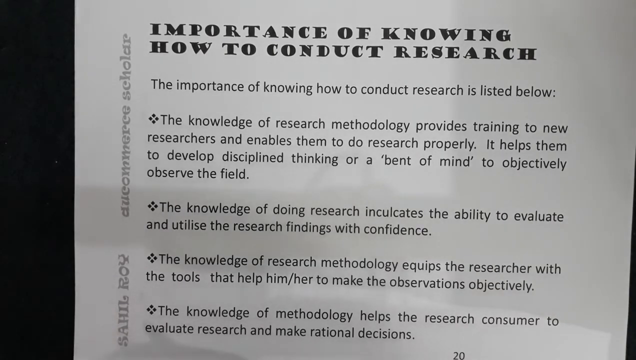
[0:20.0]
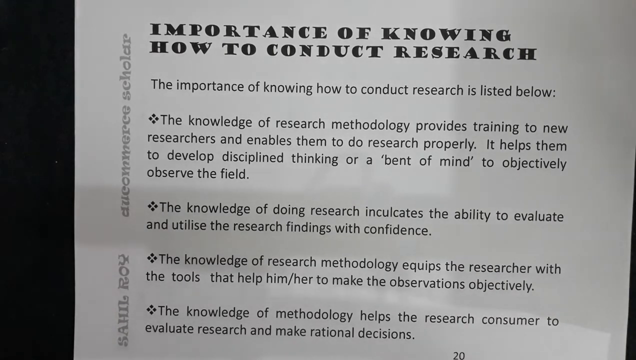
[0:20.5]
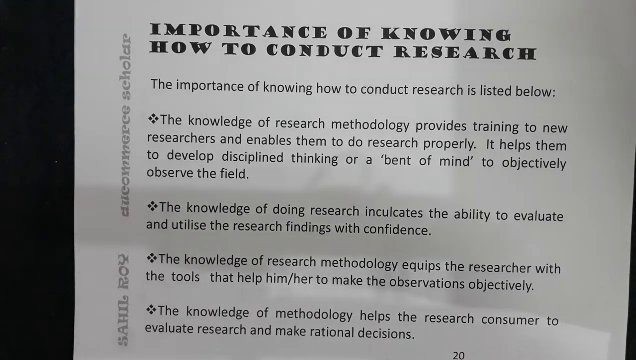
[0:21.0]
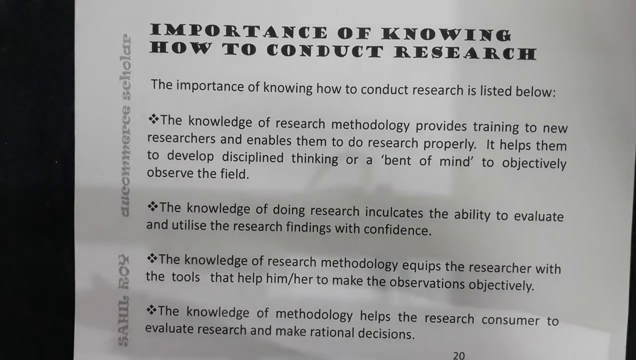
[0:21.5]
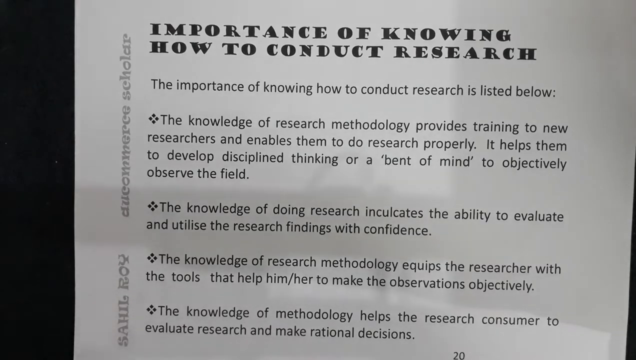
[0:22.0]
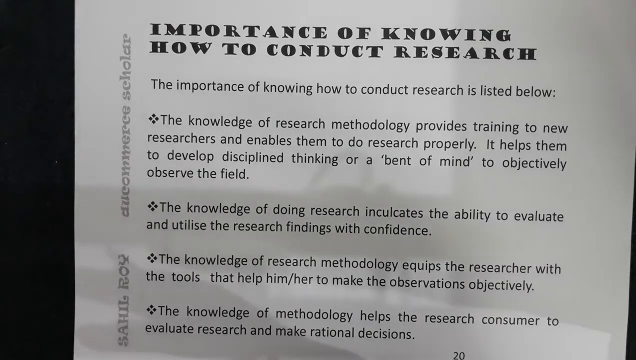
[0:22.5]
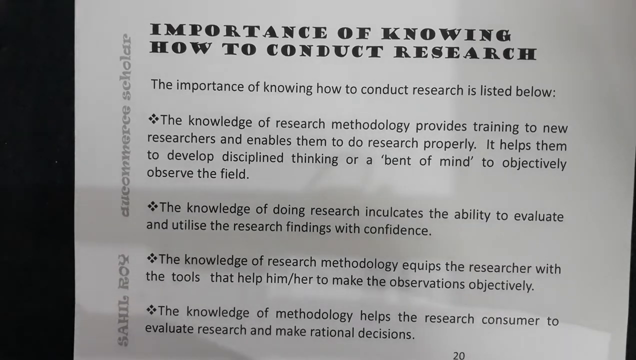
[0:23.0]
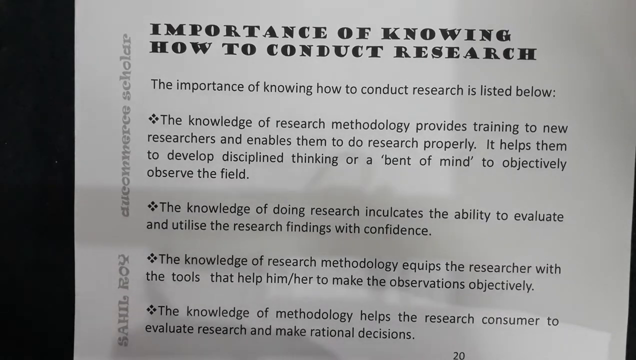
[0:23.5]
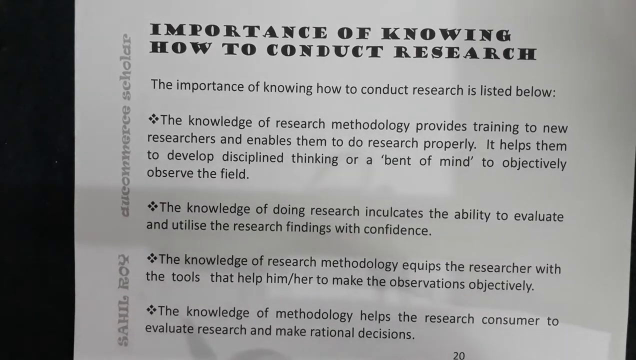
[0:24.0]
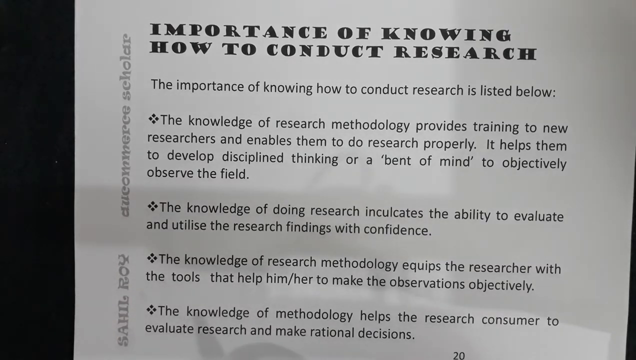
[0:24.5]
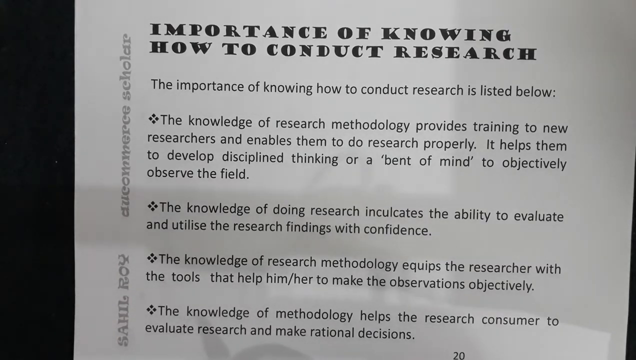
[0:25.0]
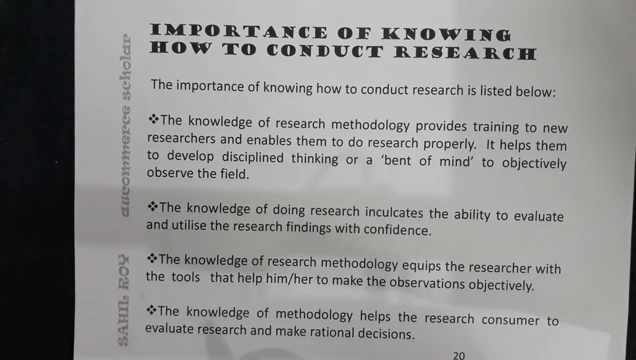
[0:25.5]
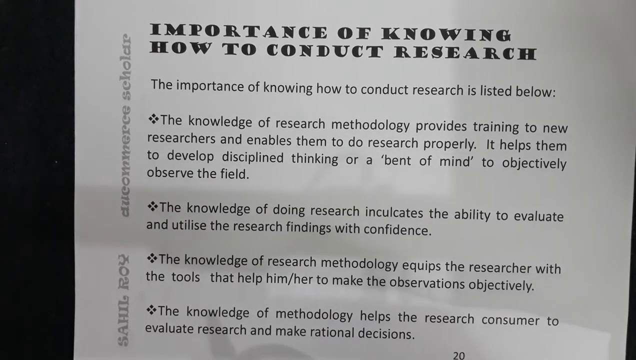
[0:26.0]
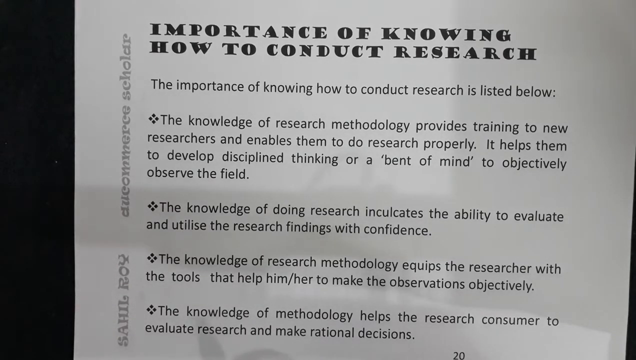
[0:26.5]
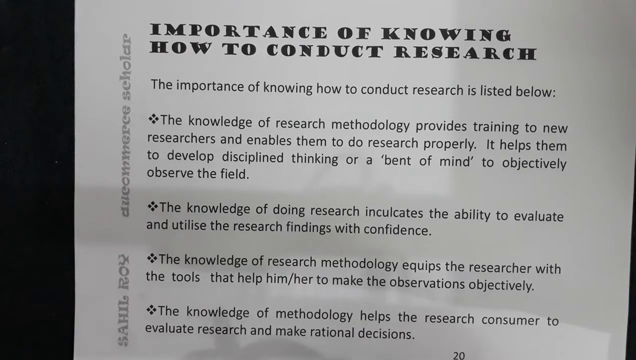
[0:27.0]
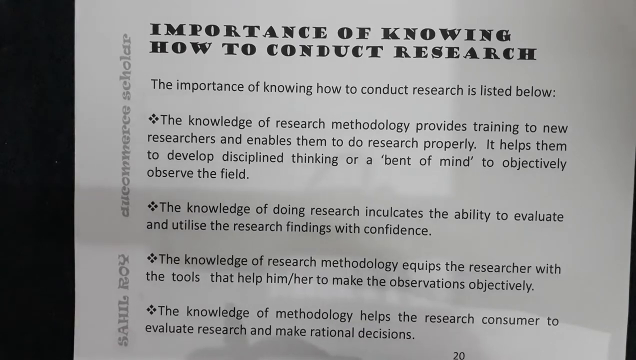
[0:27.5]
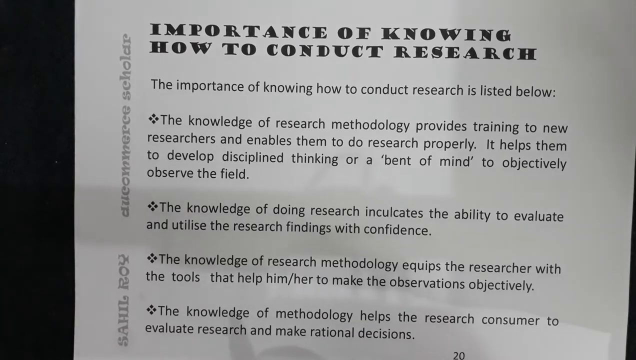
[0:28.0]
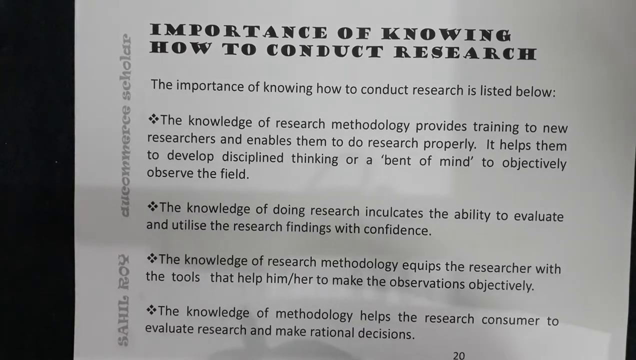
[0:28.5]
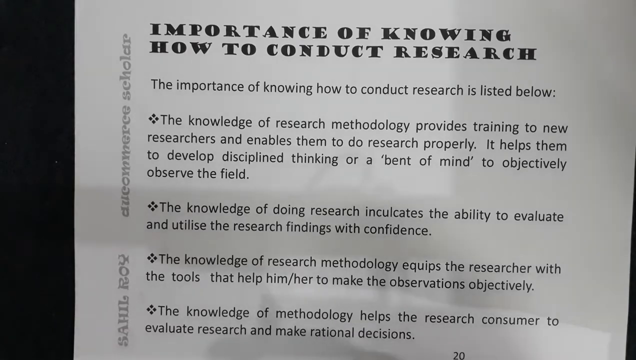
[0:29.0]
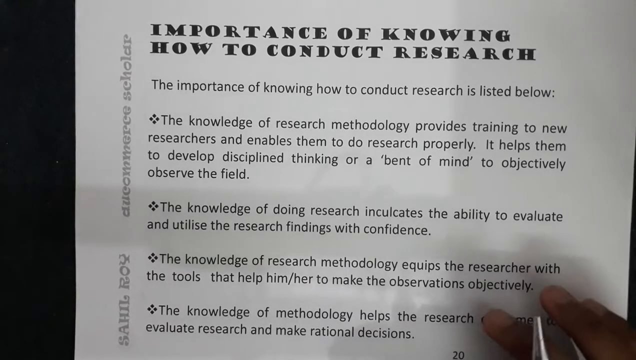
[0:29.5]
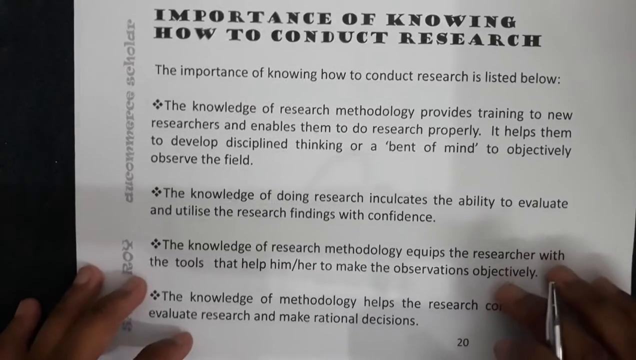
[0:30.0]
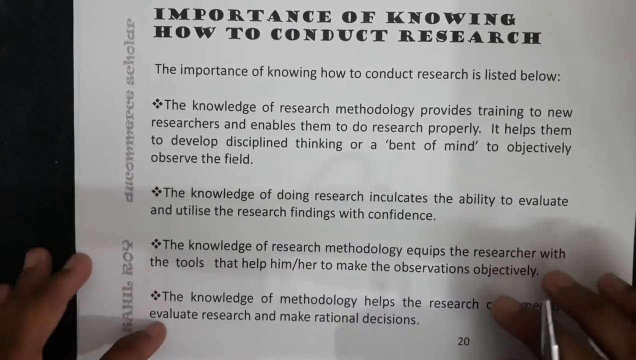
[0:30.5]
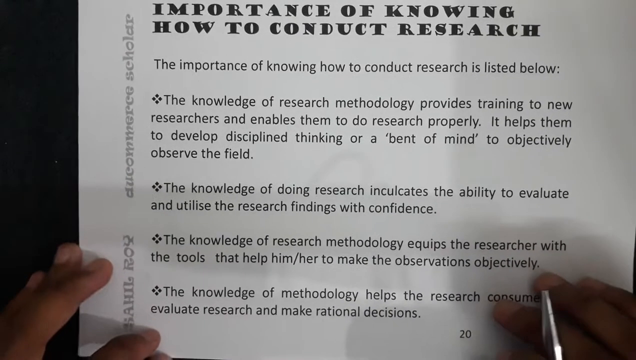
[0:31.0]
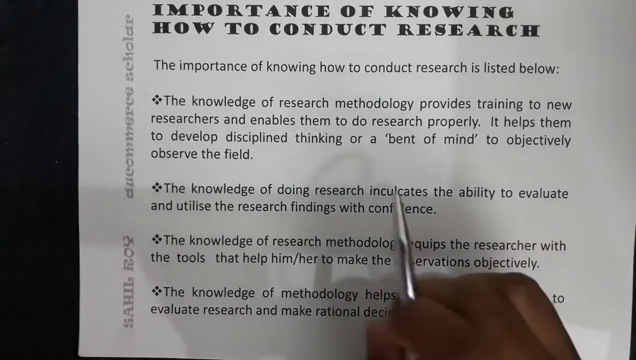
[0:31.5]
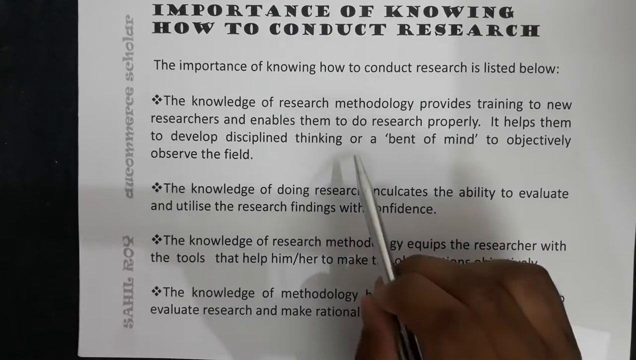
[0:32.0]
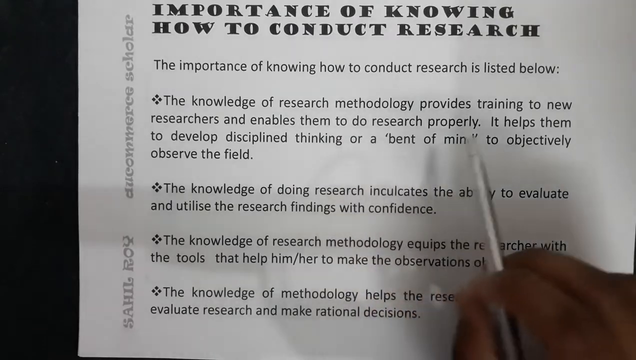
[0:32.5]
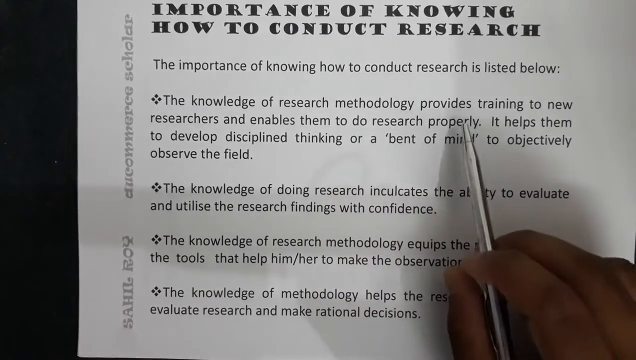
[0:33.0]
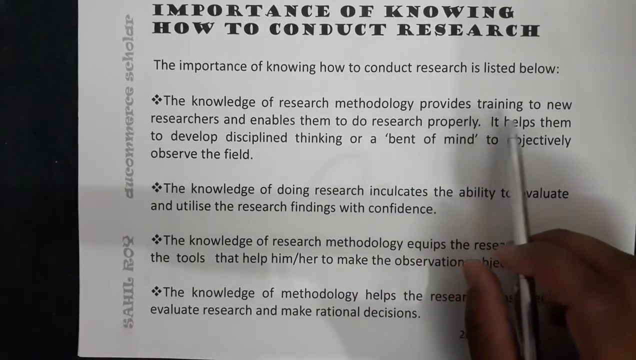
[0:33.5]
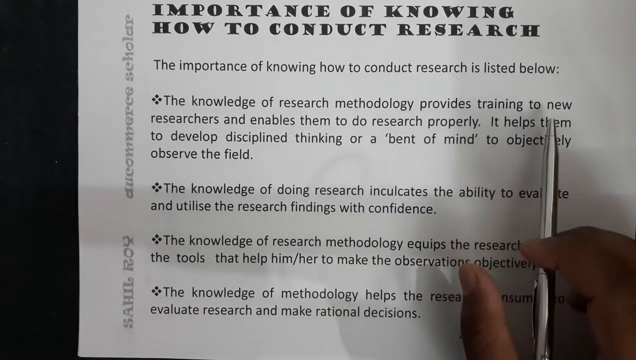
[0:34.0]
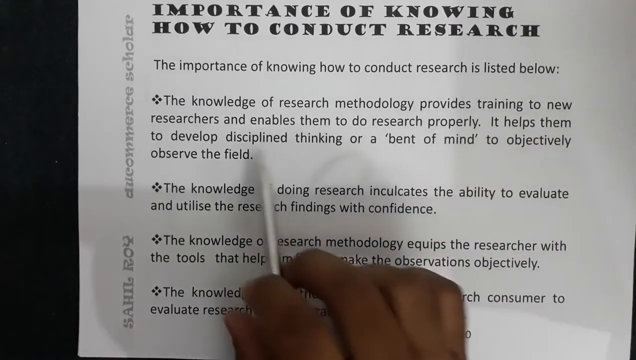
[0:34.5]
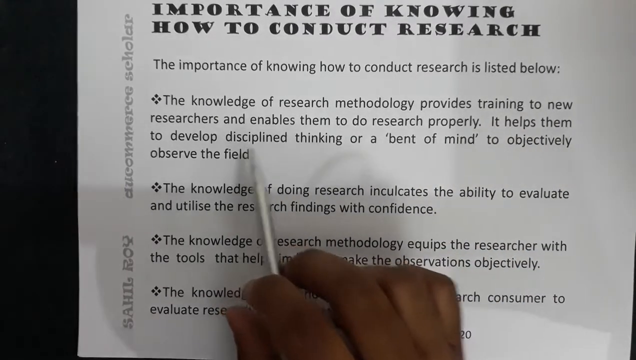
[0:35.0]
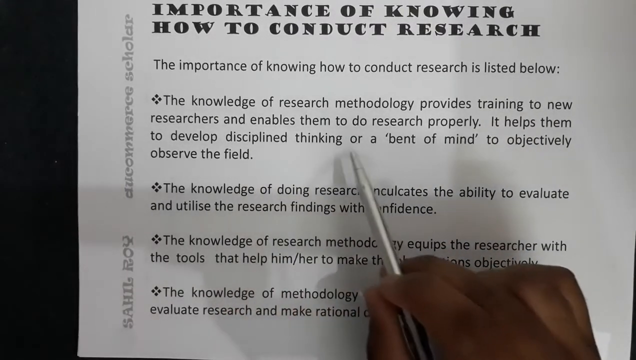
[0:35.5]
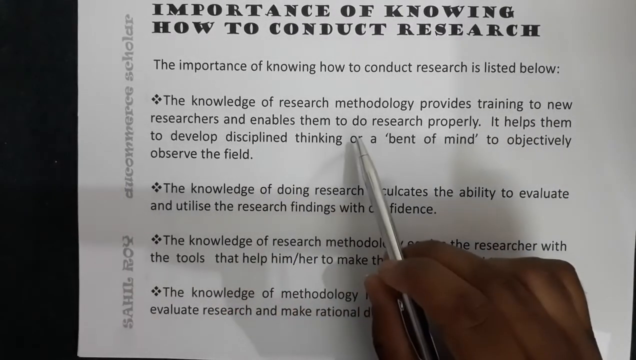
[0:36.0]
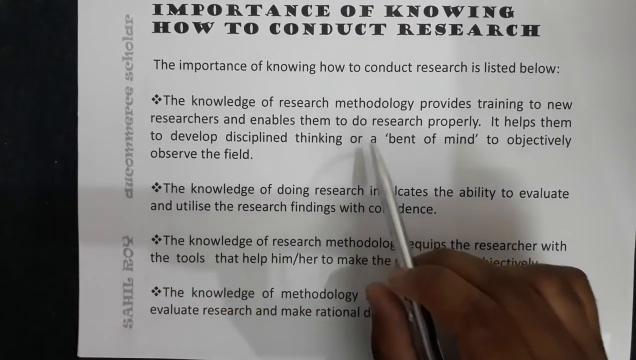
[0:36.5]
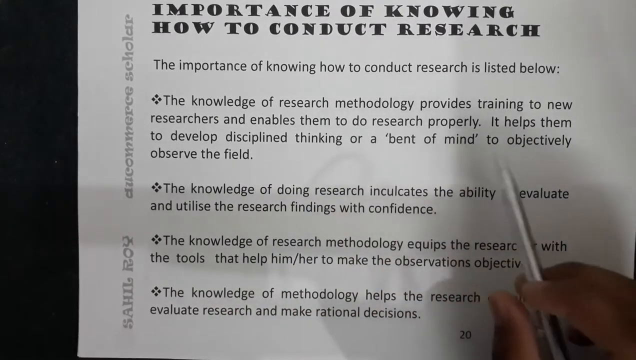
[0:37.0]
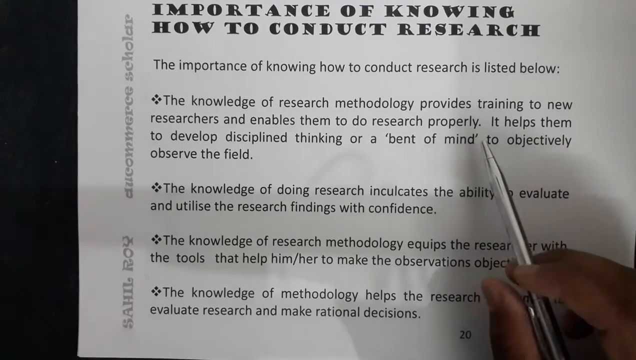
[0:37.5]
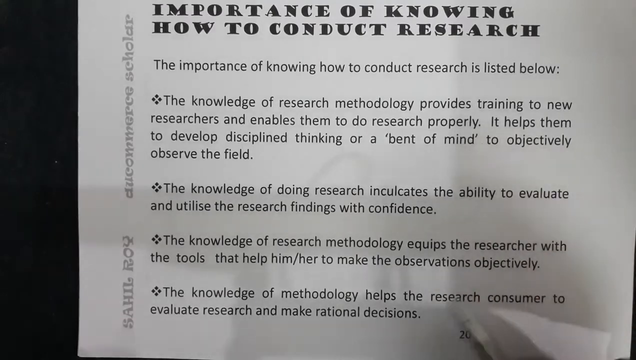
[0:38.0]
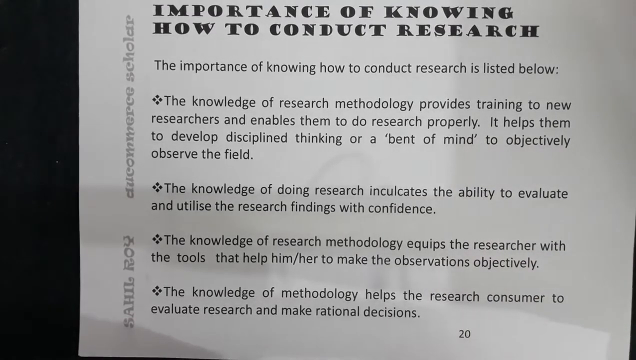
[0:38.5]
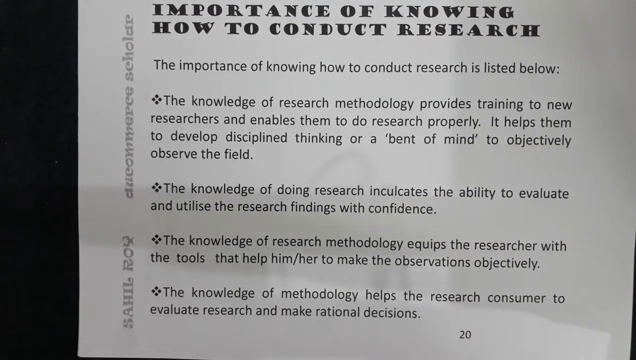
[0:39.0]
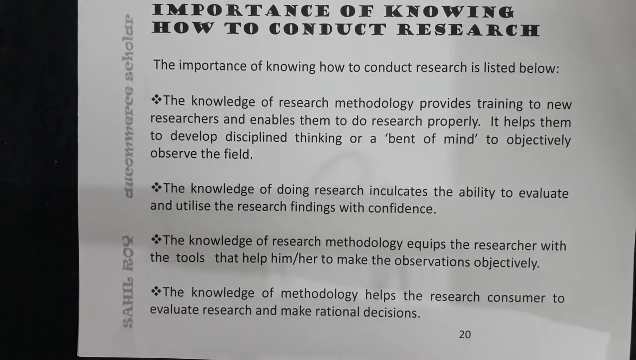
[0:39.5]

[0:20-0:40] A piece of paper has a bold title at the top that says "the importance of knowing how to conduct research." Below it reads "The importance of knowing how to conduct research is listed below. The knowledge of research methodology provides training to new researchers and enables them to do research properly. It helps them to develop disciplined thinking or a bent of mind to objectively observe the field. Knowledge of doing research inculcates the ability to evaluate and utilize the research findings with confidence. The knowledge of research methodology equips the researcher with the tools that help him or her make observations objectively. The knowledge of methodology helps research consumer to evaluate research and make rational decisions." The person's hands come up, and they appear to be reading out everything on the paper while pointing to something with the pen.